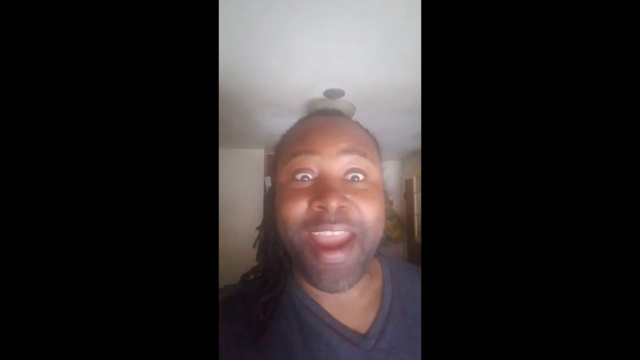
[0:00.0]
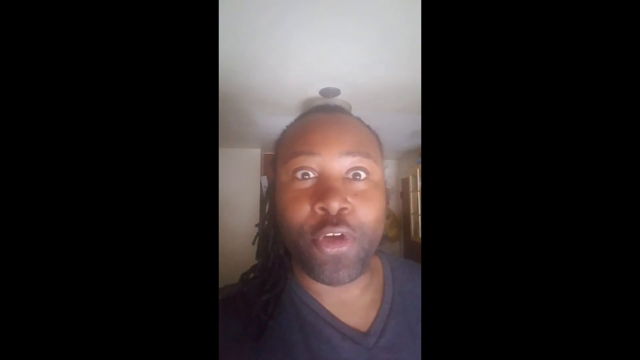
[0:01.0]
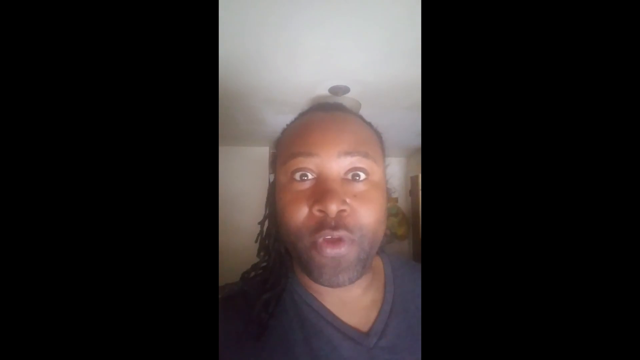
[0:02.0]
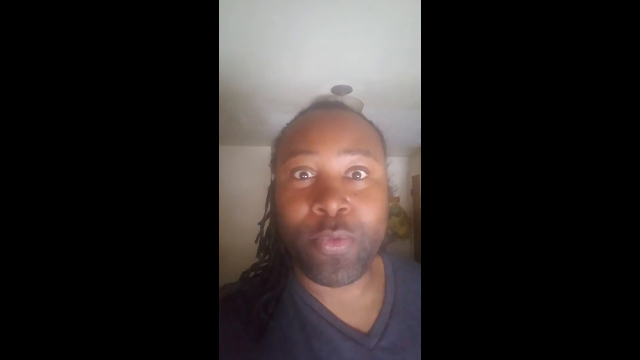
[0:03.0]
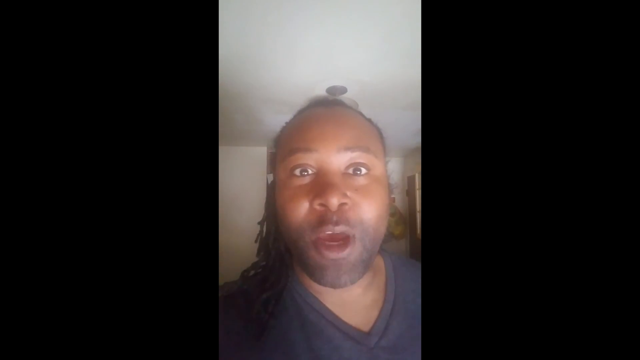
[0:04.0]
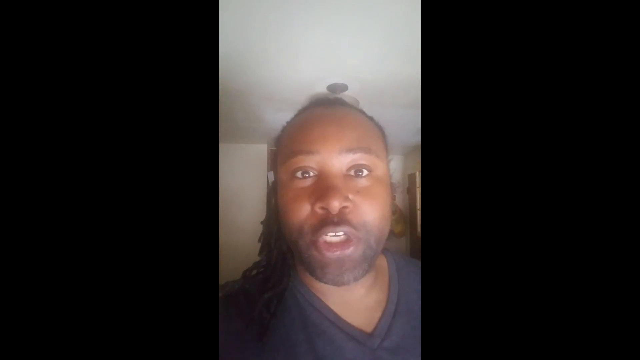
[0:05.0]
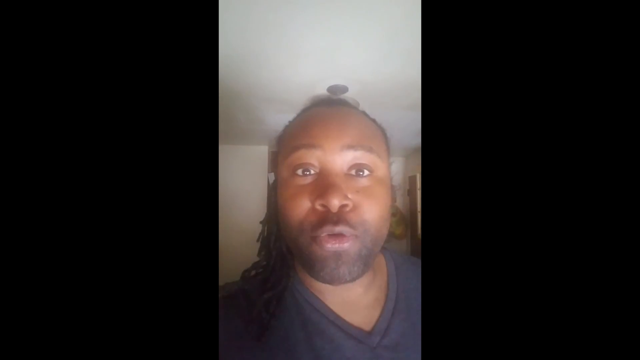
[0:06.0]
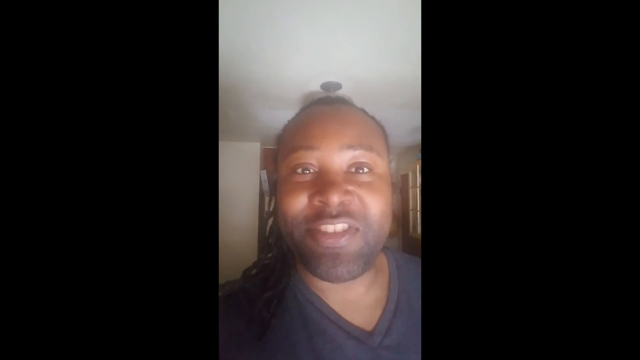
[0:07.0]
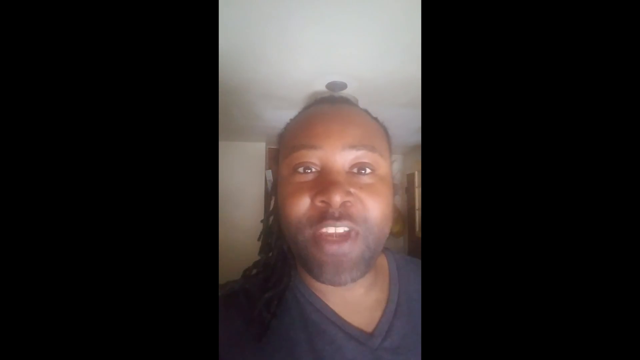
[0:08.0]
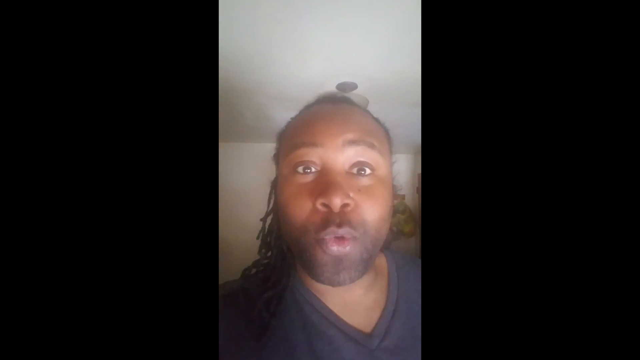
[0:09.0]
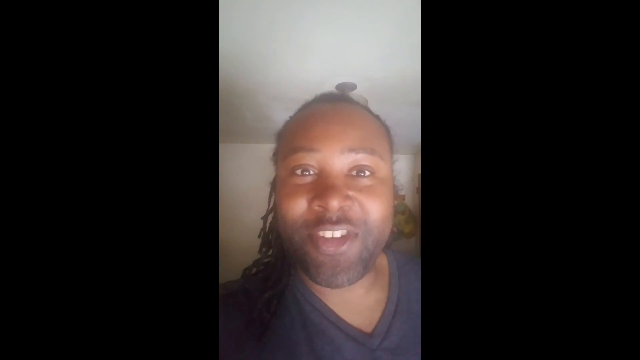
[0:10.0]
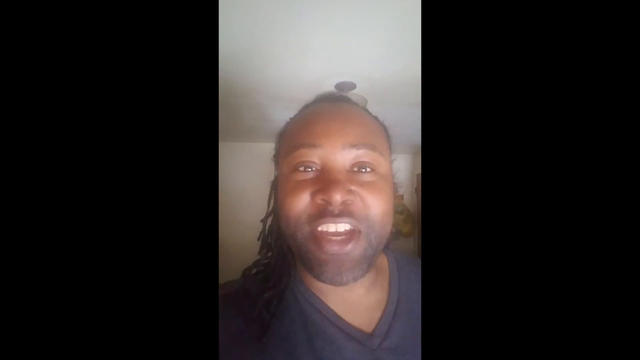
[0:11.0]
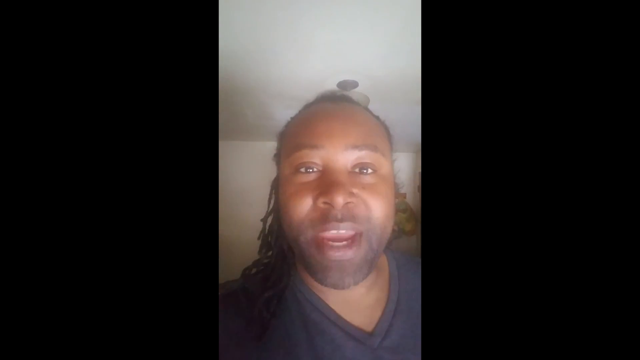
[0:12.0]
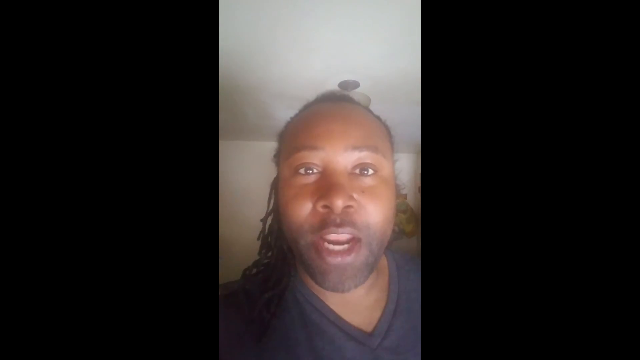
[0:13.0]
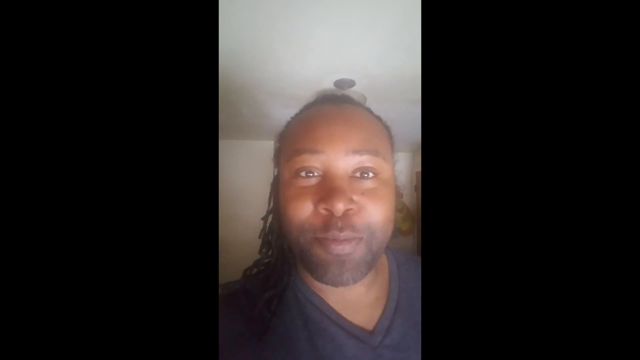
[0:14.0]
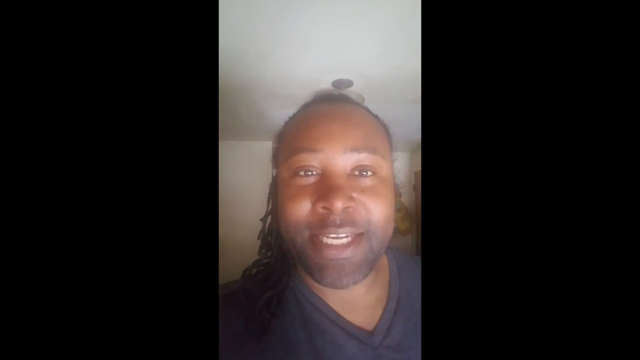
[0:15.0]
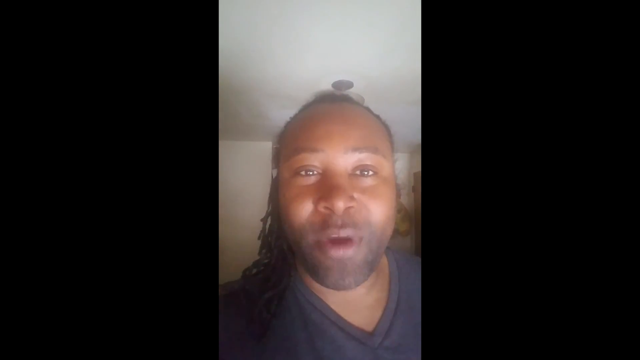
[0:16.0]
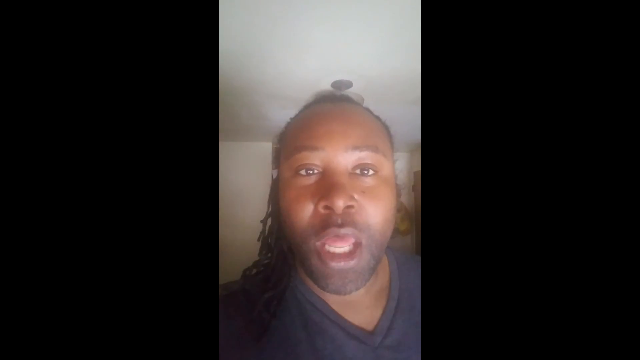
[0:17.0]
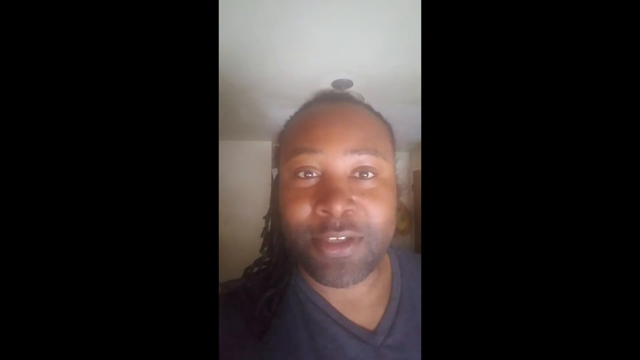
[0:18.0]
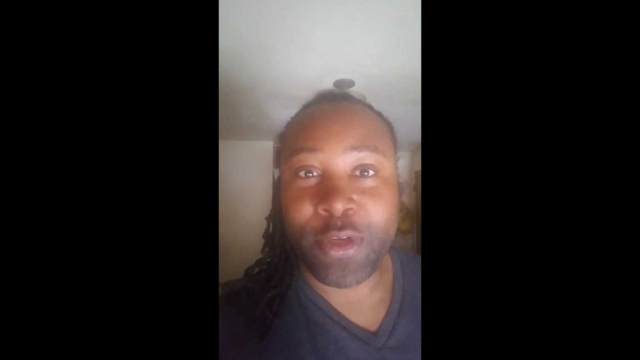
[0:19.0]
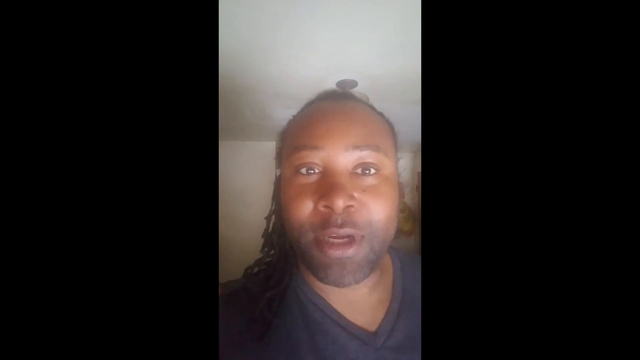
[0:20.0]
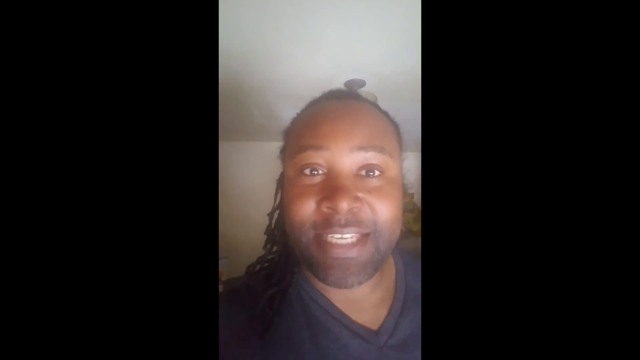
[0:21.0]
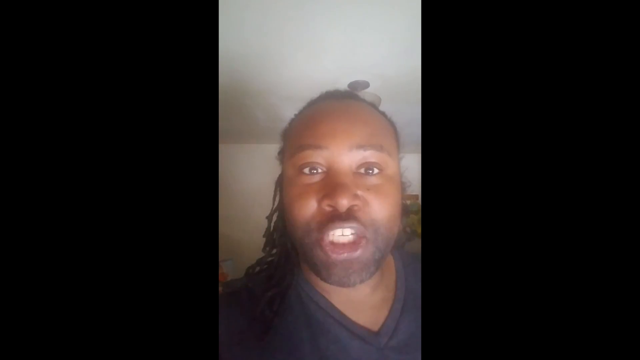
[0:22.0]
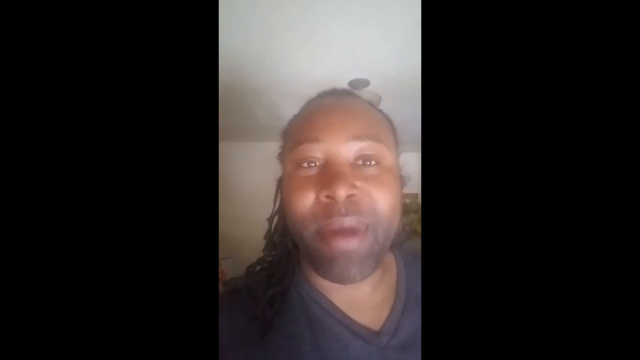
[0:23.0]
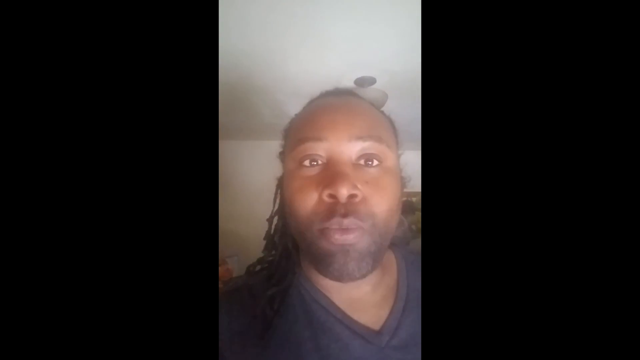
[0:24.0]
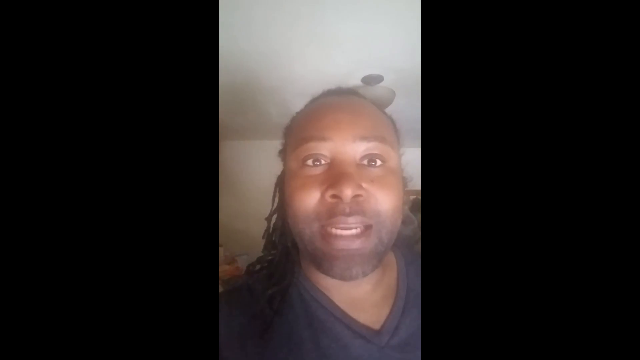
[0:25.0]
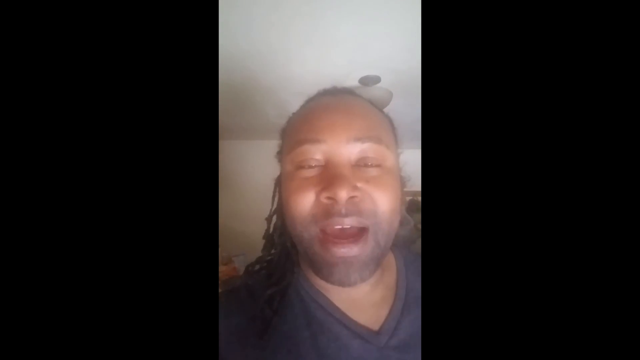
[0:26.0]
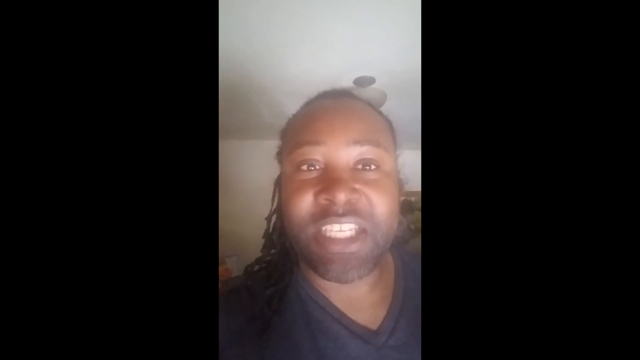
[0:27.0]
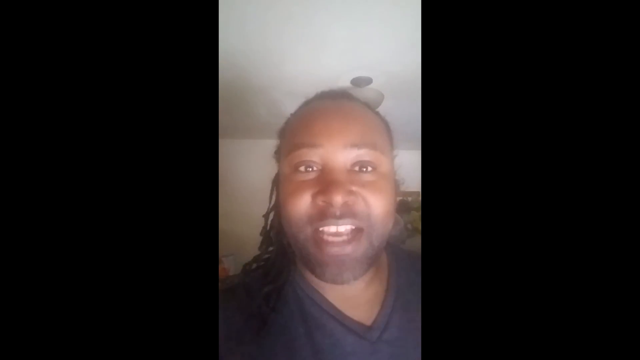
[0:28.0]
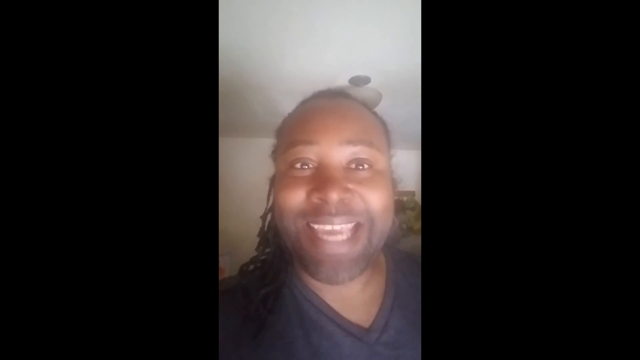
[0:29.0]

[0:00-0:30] The video plays in the middle of the screen, with black bars on the right and left sides, so it does not take up the entire screen. A man talks directly to the camera. He is a black man who looks to be in his 20s or 30s, wearing a blue V-neck shirt, and he has what looks like long hair pulled back. He is inside a room with white walls and a white ceiling. What appears to be a light source comes down from the ceiling right above his head, and some type of picture or item may be visible behind him. He talks straight to the camera until the very end of the shot.